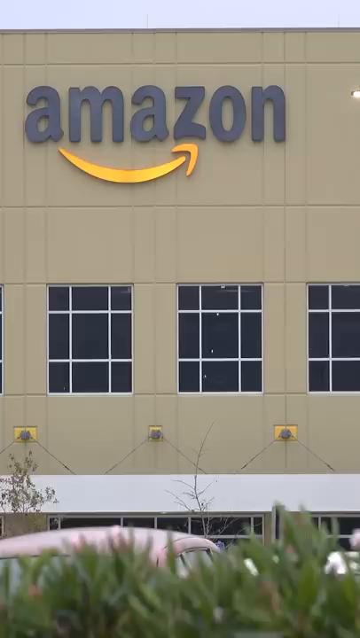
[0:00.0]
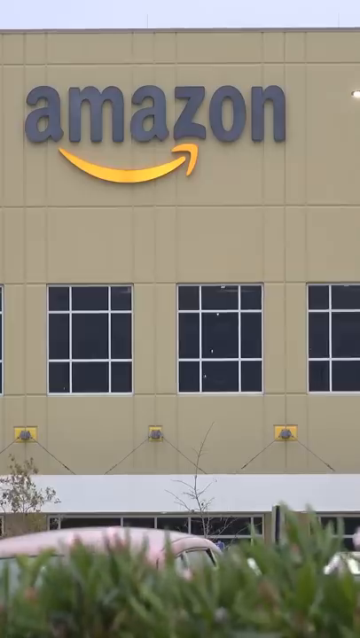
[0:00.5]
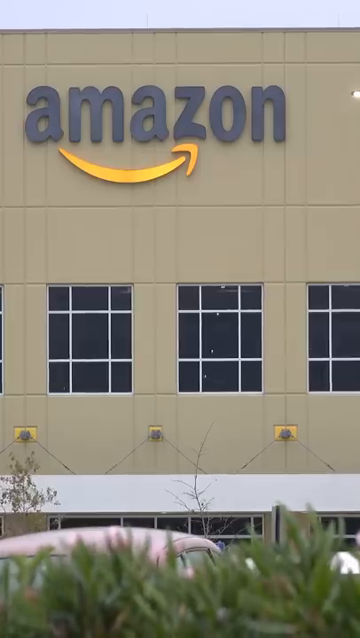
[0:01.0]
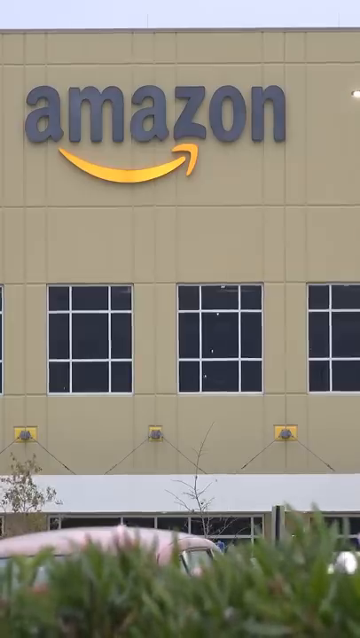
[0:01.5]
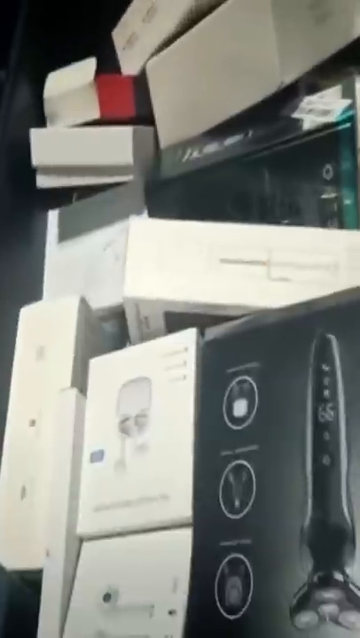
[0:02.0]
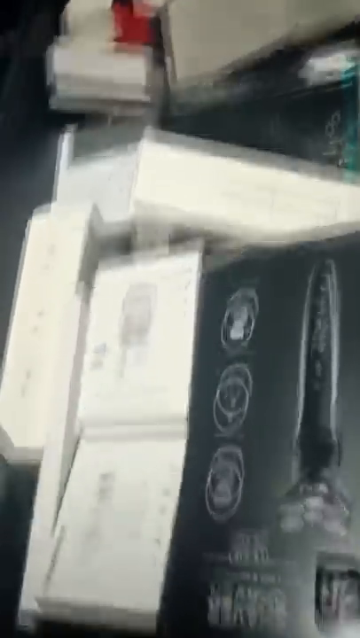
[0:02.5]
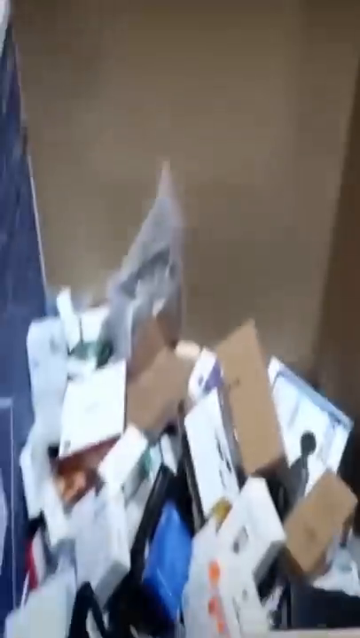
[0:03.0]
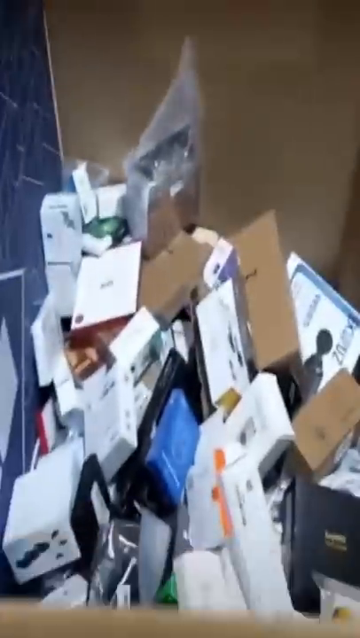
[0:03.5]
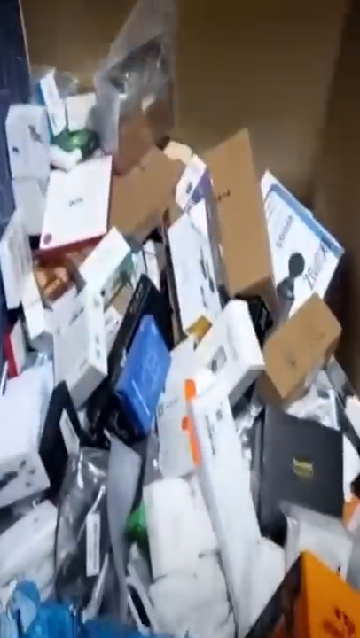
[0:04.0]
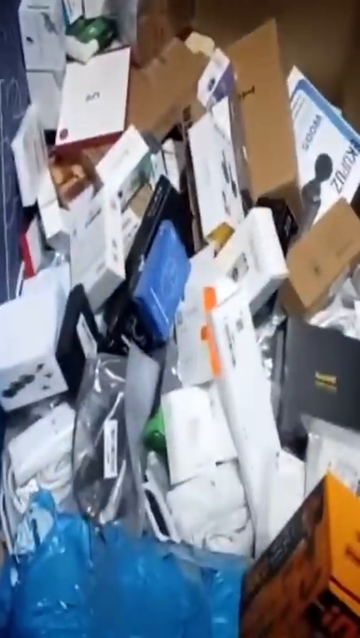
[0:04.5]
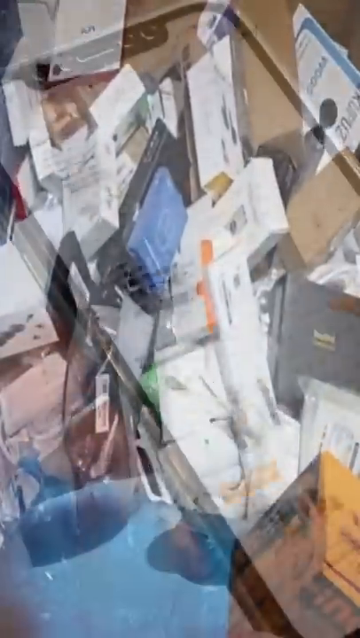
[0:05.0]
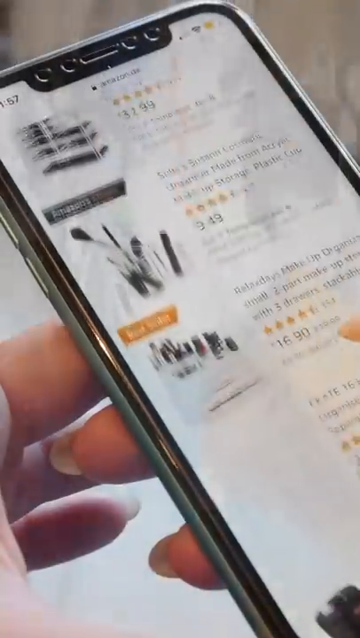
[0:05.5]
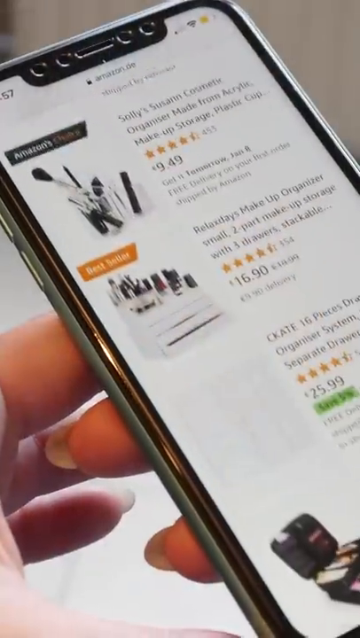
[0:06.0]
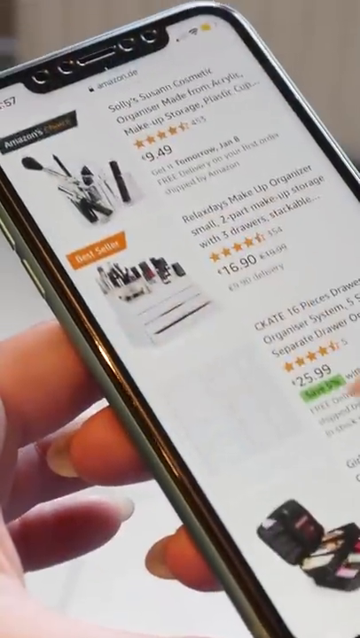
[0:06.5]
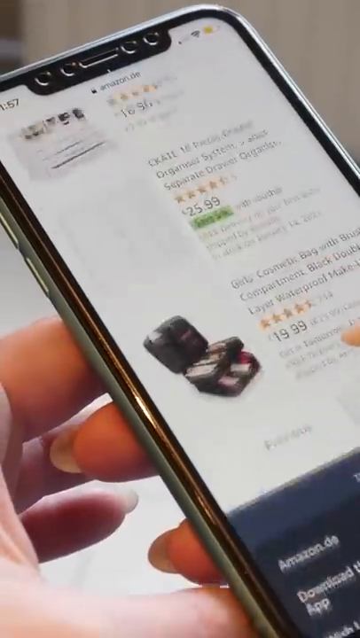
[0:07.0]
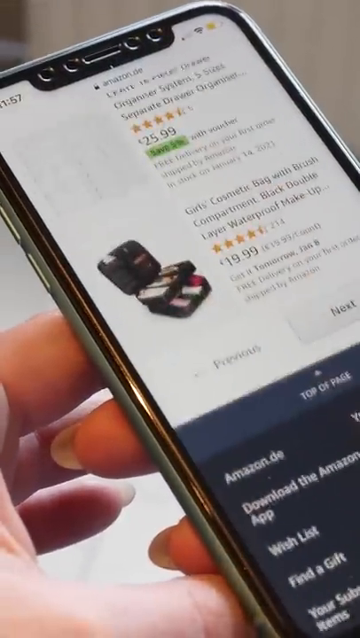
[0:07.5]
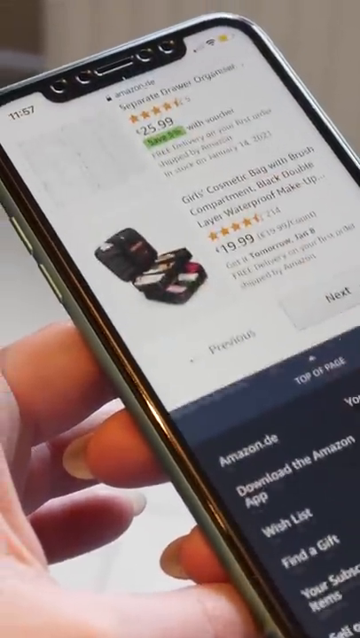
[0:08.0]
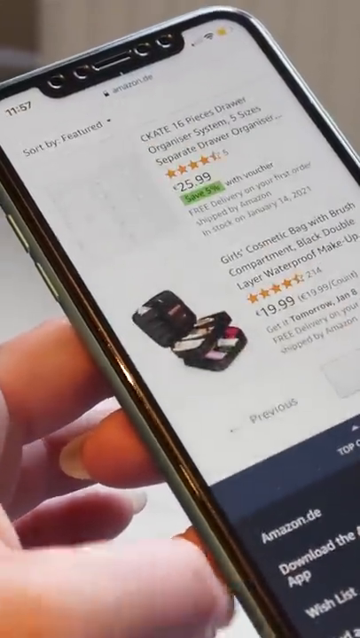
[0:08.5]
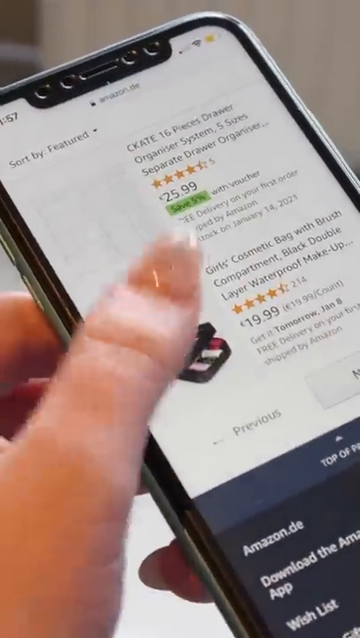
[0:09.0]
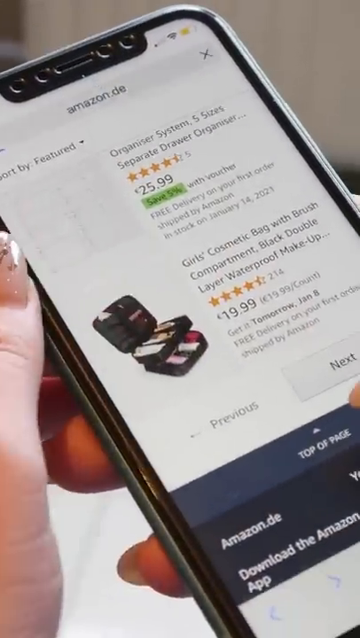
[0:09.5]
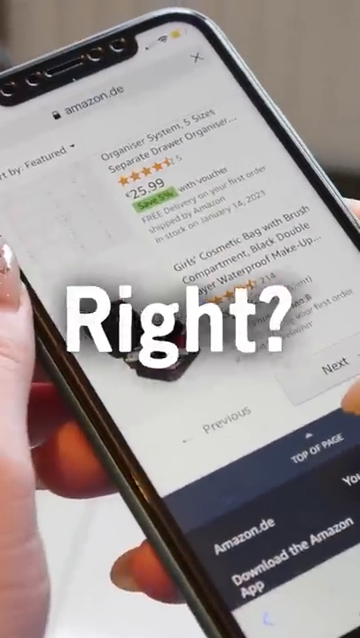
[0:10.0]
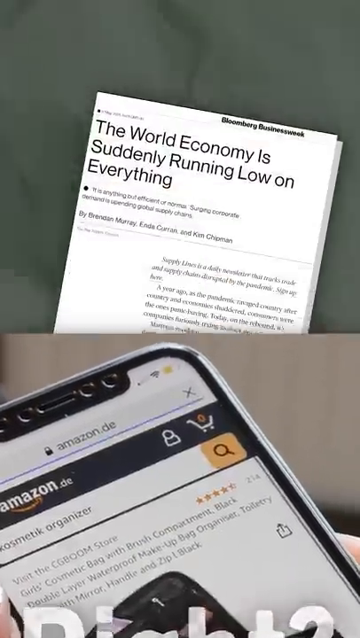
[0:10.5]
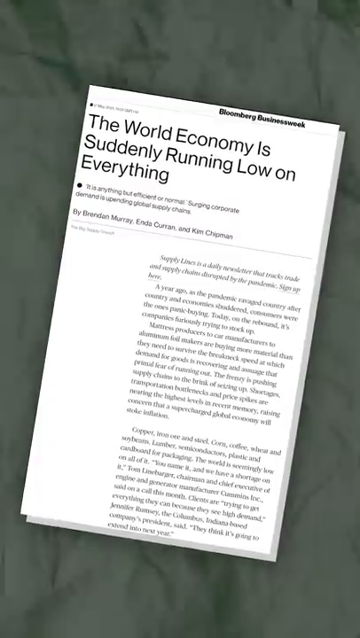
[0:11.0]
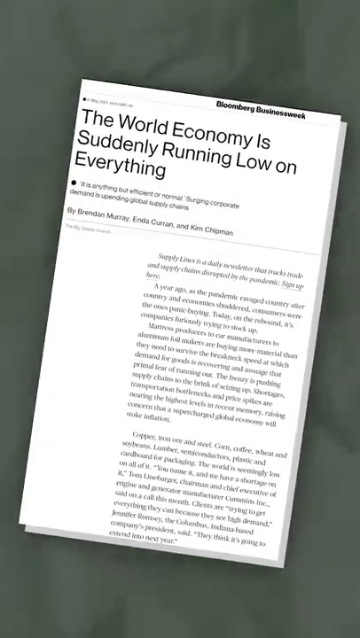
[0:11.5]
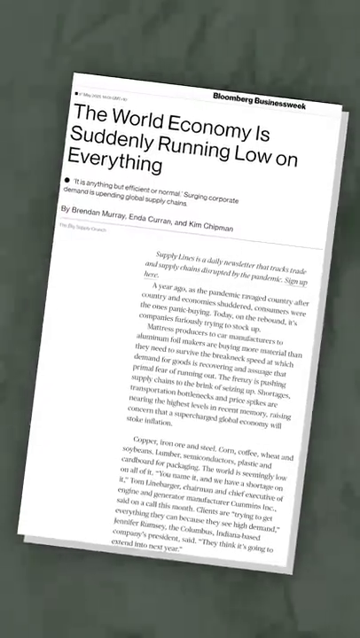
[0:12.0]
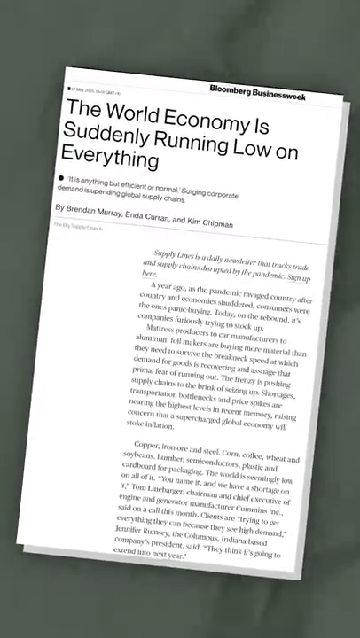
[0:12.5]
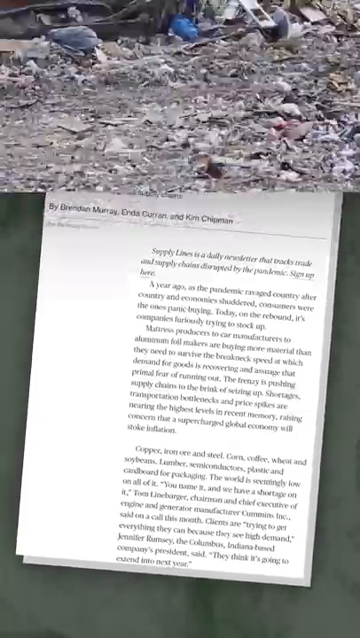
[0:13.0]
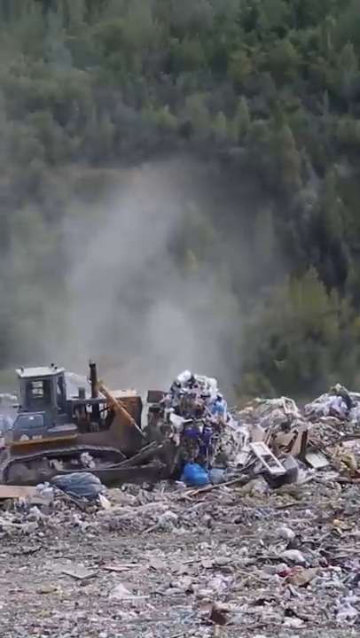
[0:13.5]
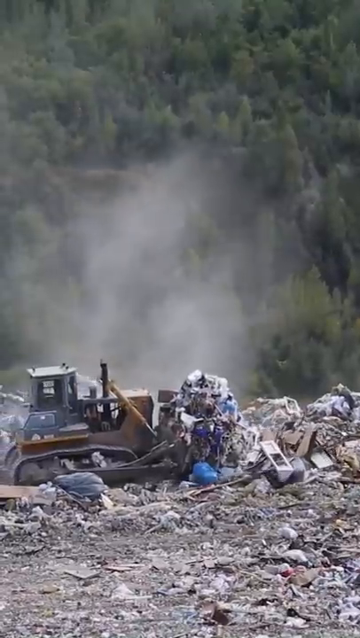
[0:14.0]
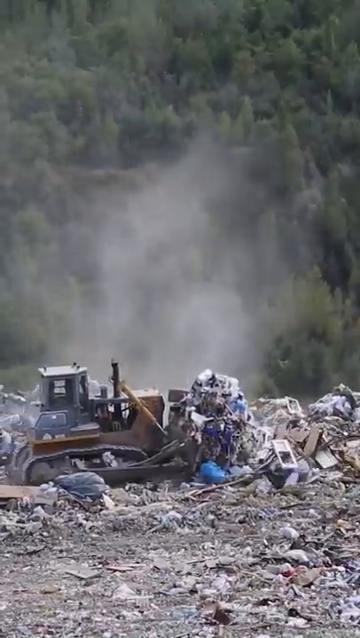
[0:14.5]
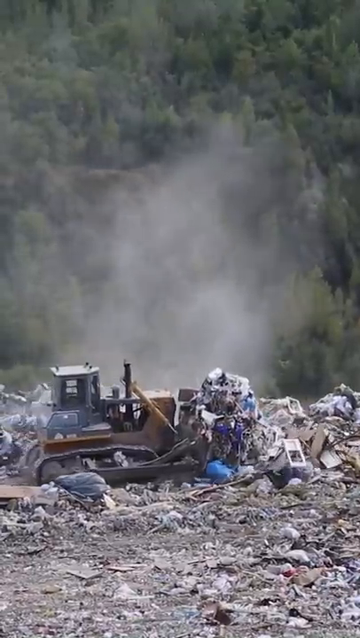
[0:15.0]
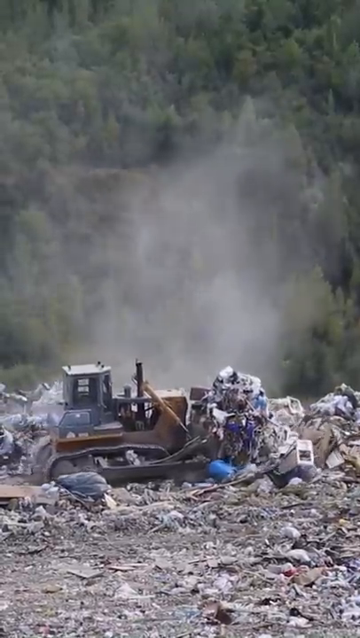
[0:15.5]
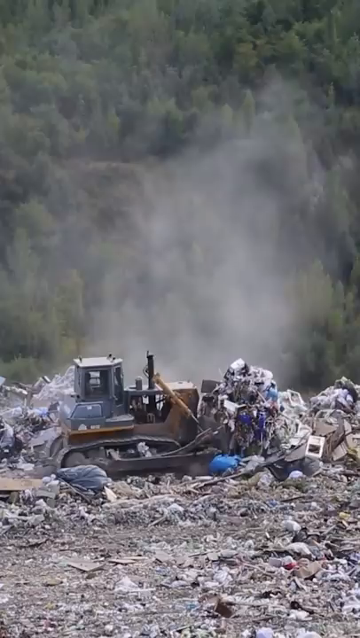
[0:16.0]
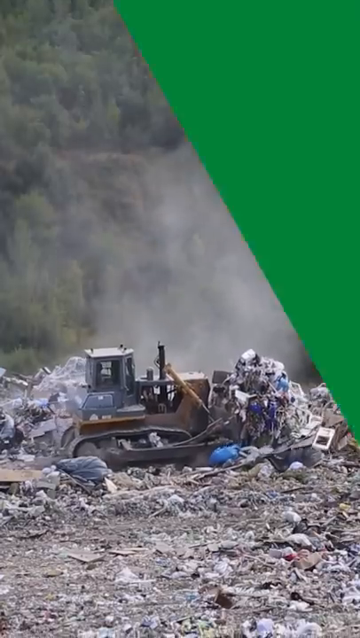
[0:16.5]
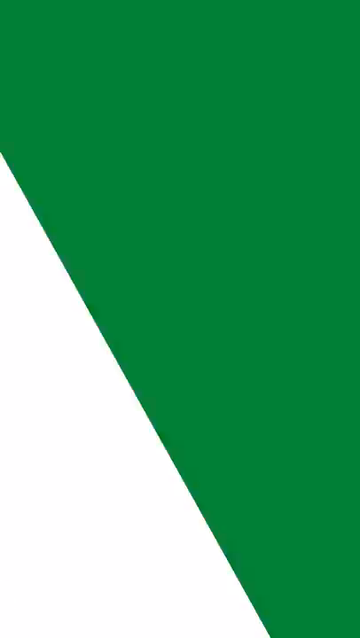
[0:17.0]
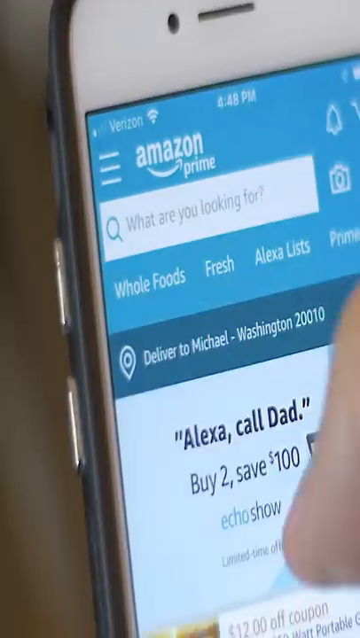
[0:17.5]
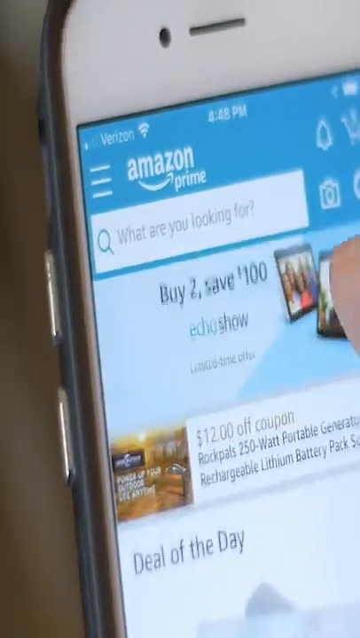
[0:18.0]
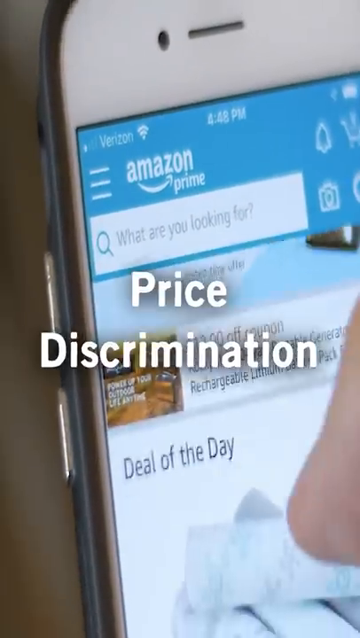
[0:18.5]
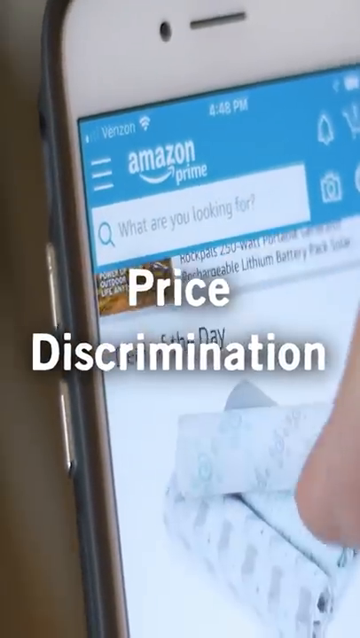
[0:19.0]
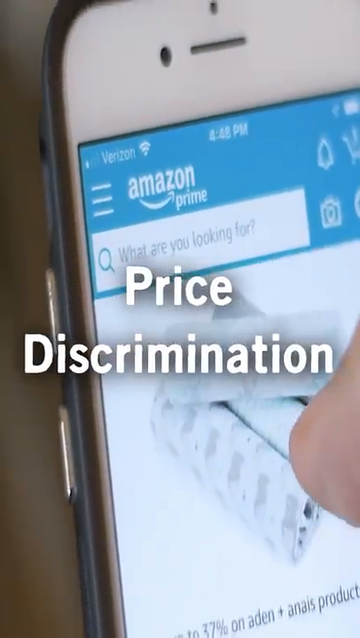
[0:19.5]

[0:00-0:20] The phrase "price discrimination" appears briefly in a quick edit. In one scene, what looks like a robotic forklift moves large shipments of packages from high storage areas down to the ground.